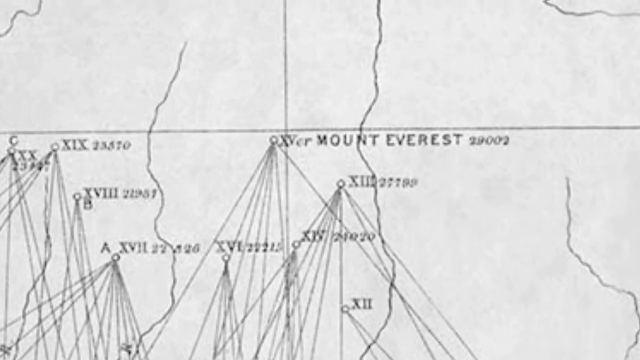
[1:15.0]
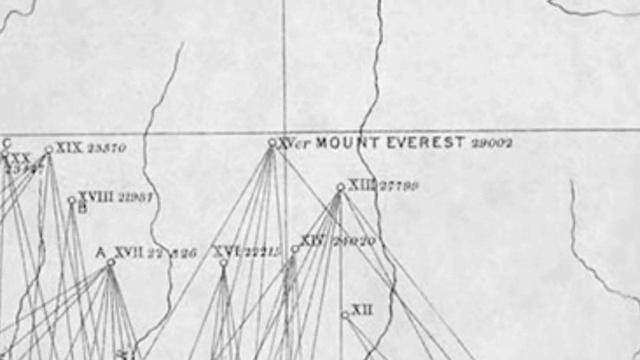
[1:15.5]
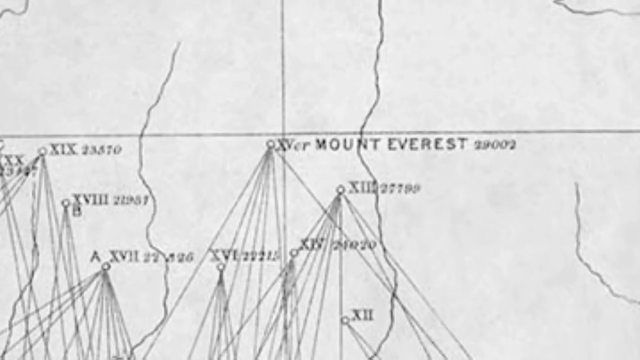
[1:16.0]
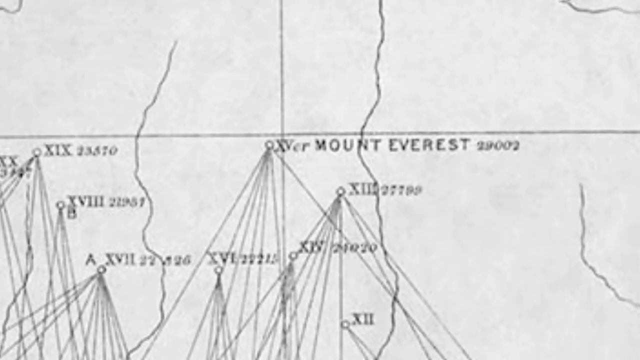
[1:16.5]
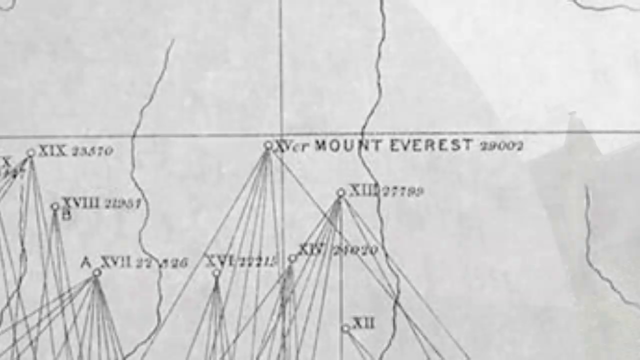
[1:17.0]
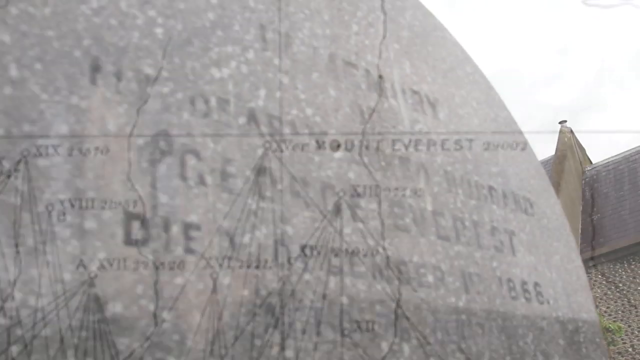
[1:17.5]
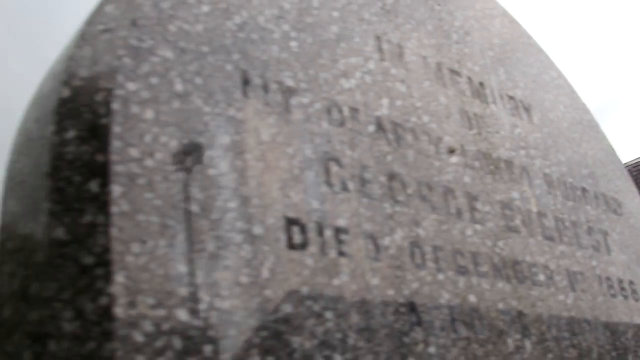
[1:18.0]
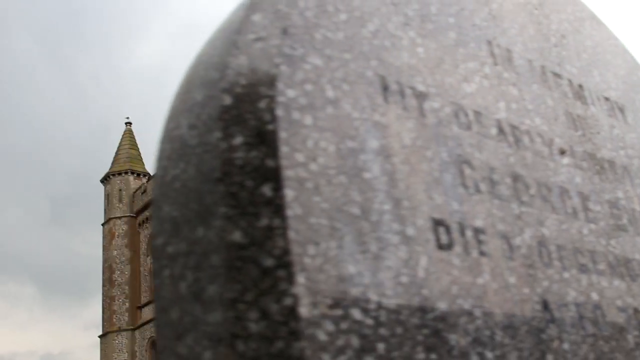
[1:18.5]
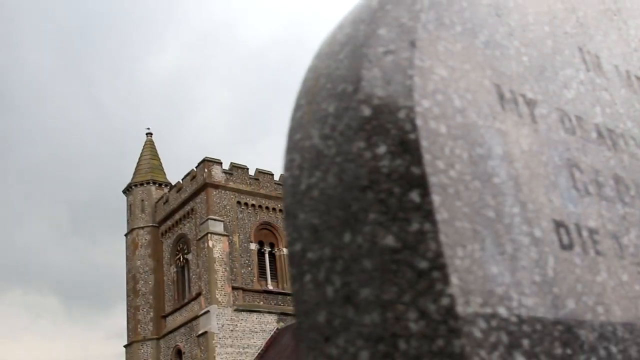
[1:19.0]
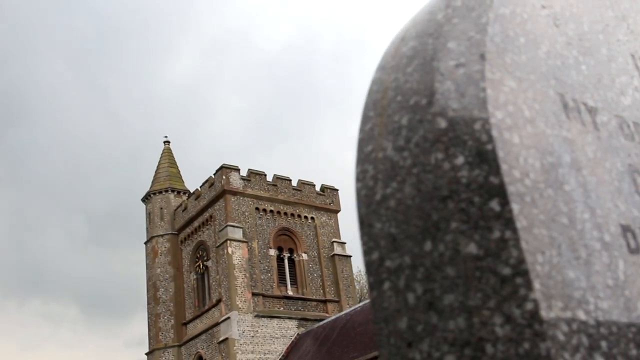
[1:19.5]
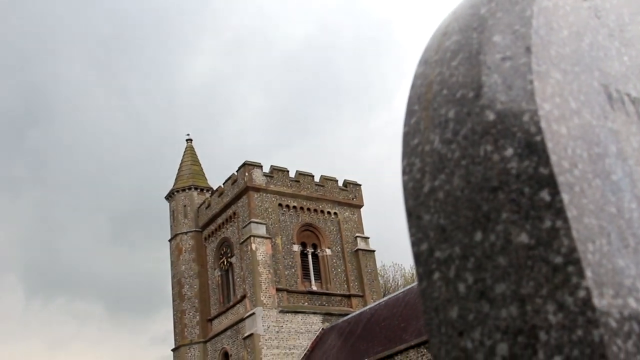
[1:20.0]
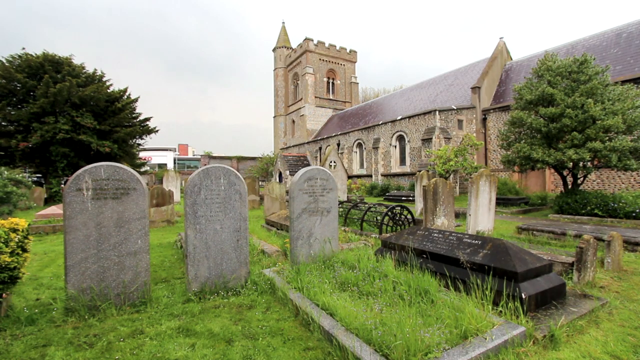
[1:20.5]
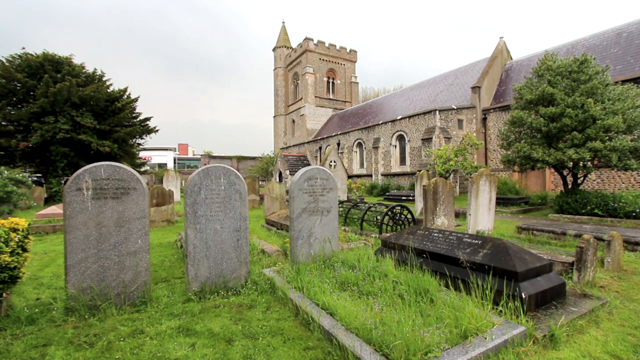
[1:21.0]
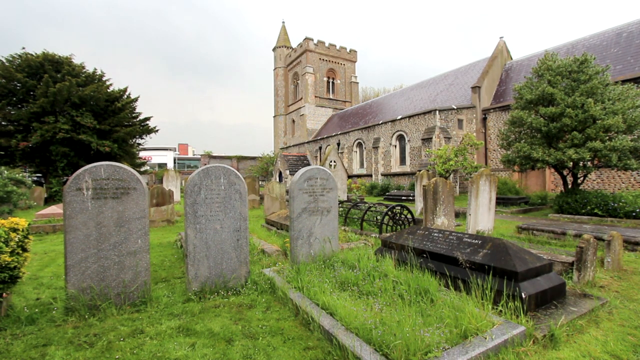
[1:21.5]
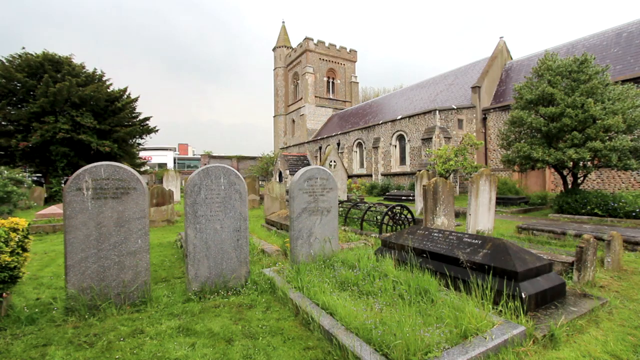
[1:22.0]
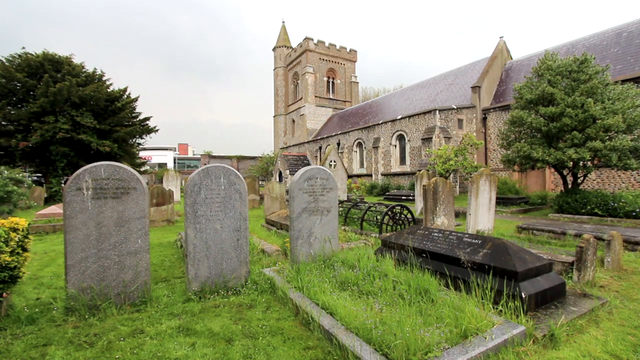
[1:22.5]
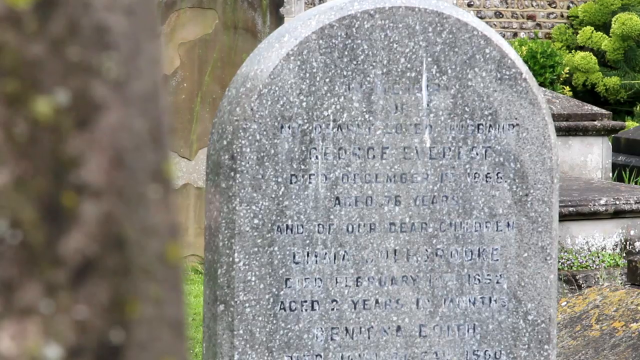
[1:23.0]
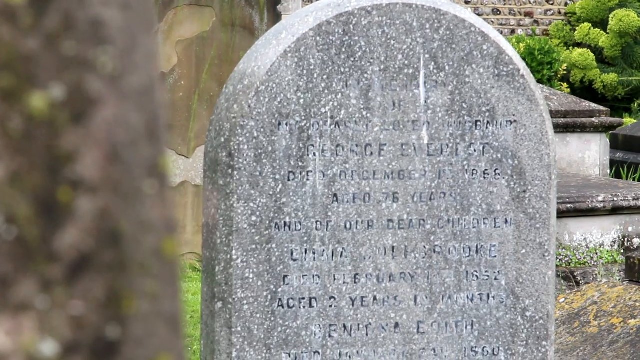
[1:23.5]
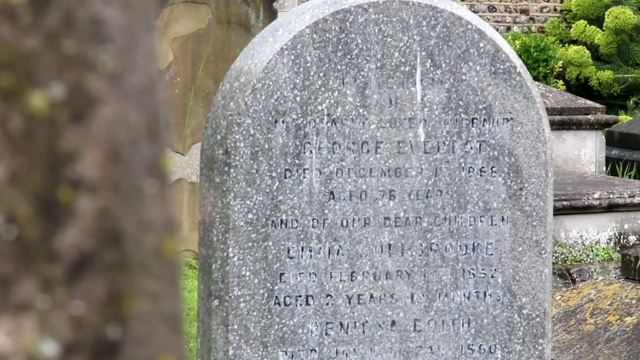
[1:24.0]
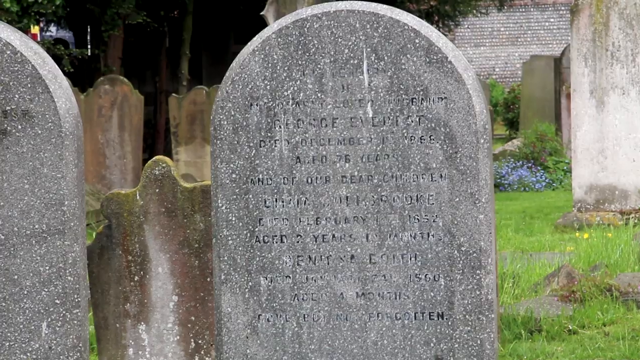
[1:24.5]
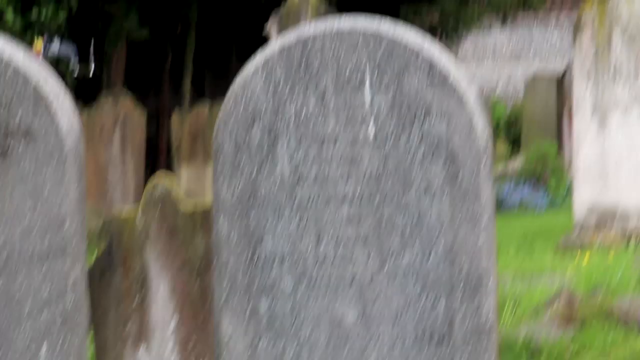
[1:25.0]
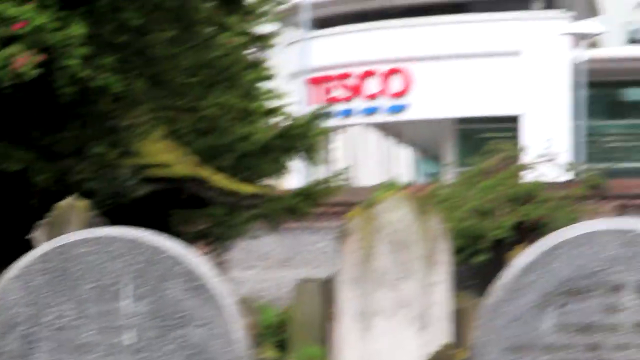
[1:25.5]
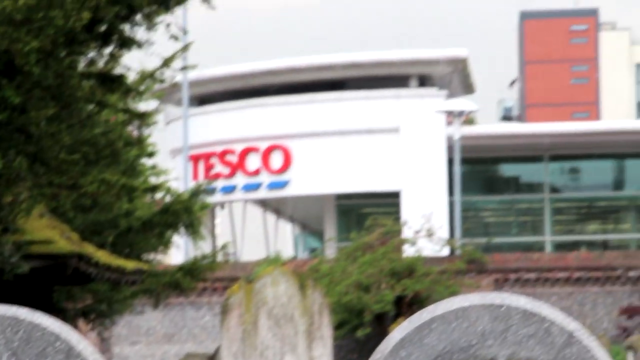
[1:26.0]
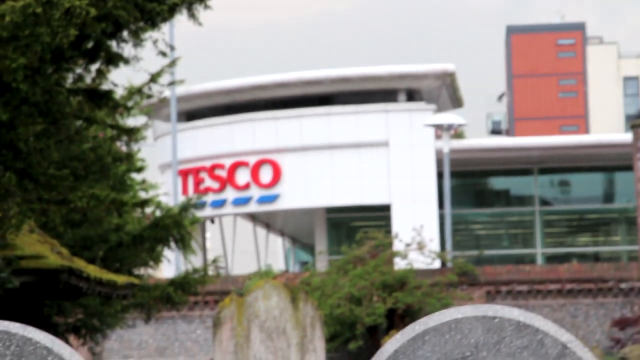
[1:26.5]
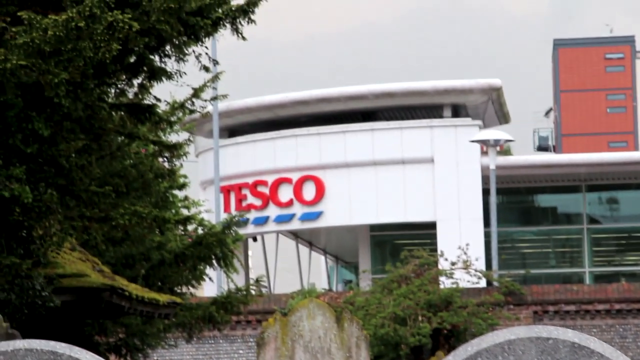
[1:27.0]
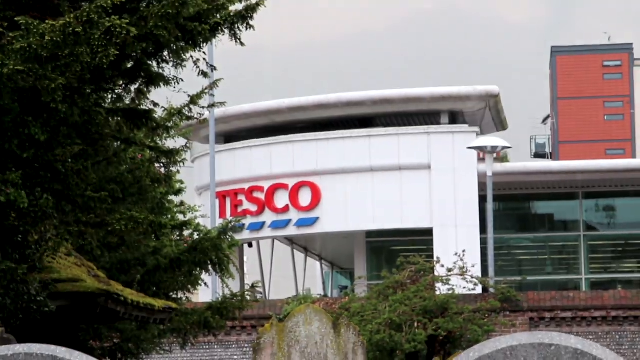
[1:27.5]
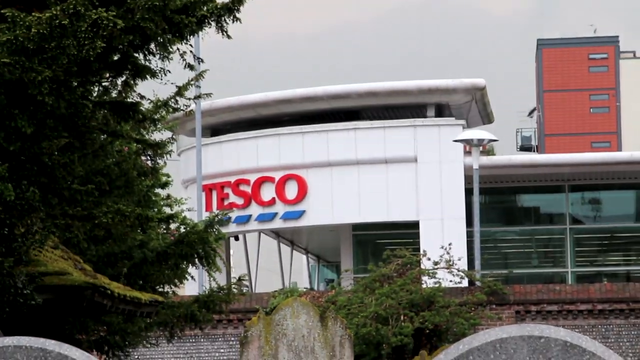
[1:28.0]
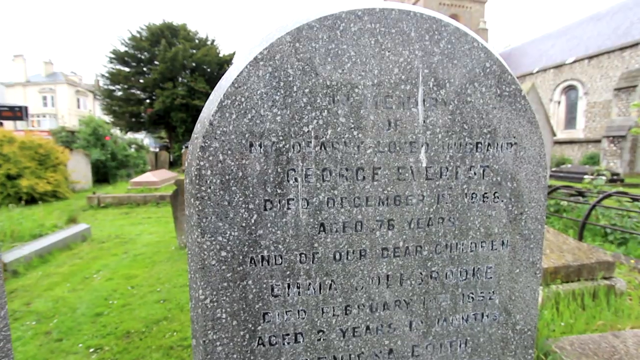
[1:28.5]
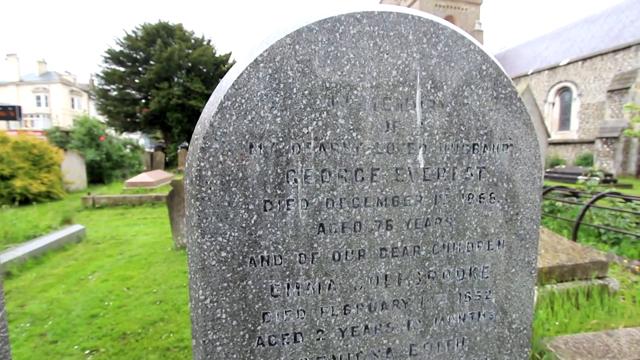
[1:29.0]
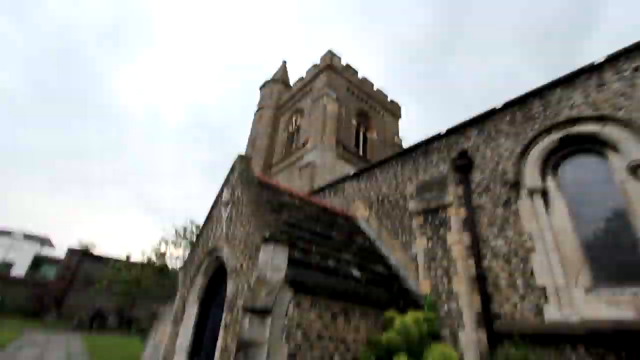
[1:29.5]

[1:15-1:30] The map zooms in on Mount Everest, then the video cuts quickly to the cemetery with the church, focusing on a couple of stone gravestones with curved arches; one clearly has "George Everest" carved into it. The camera pulls away from the church and briefly focuses on a white building with "Tesco" in red on the front, very close to the church. Everest apparently is buried in this churchyard in a busy area. The video moves between various images of the cemetery, including Everest's gravestone, with green trees and green grass, and a brief outdoor view of people crossing the street. The map zooms in on the words "Mount Everest"; it is white with black or dark gray writing and many straight lines drawn on it, presumably a surveyor's map.